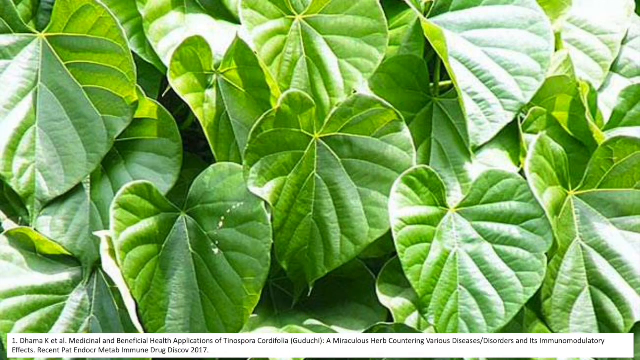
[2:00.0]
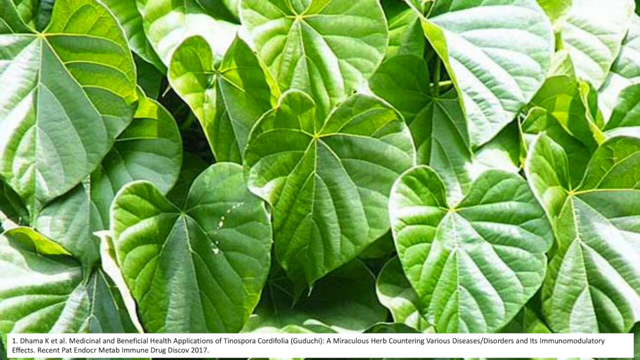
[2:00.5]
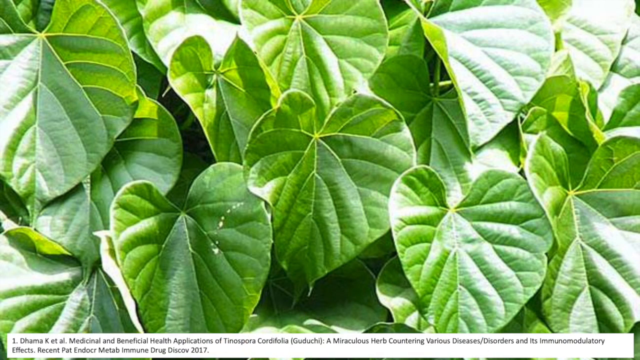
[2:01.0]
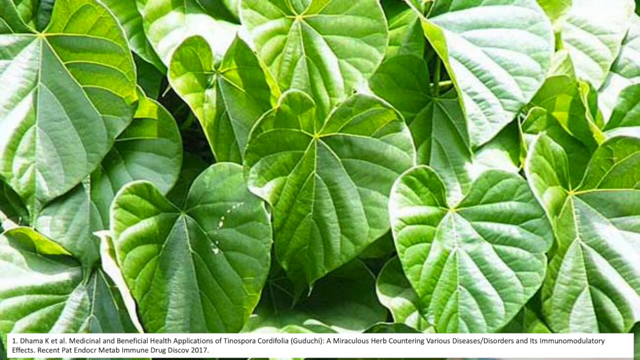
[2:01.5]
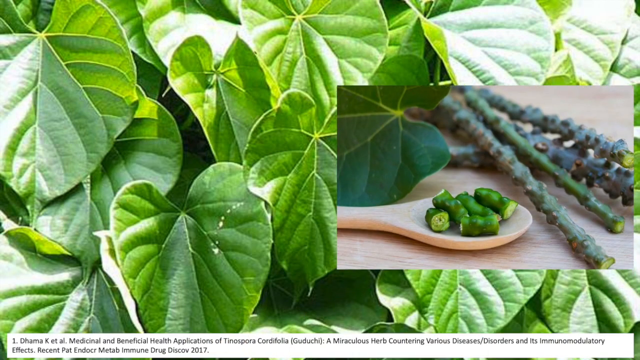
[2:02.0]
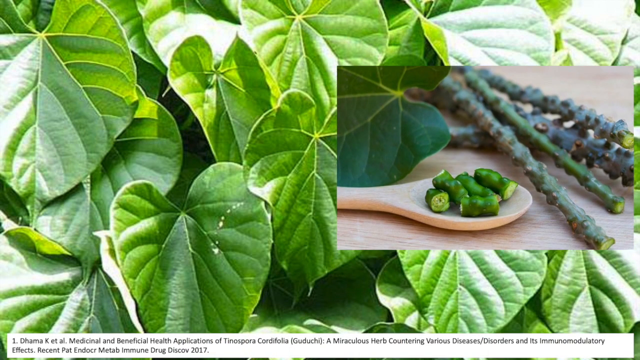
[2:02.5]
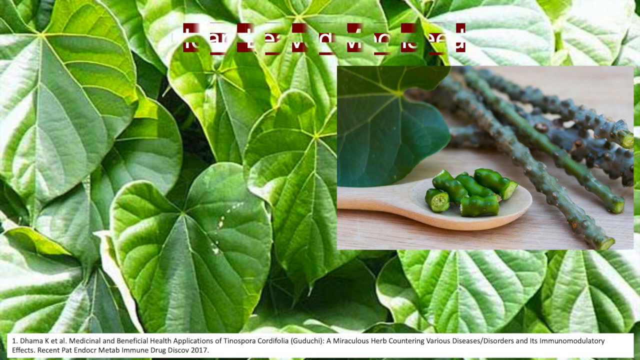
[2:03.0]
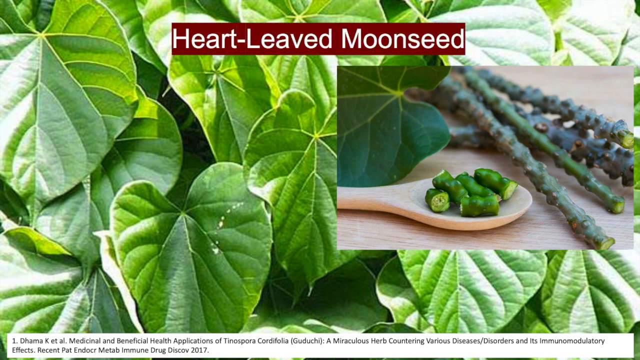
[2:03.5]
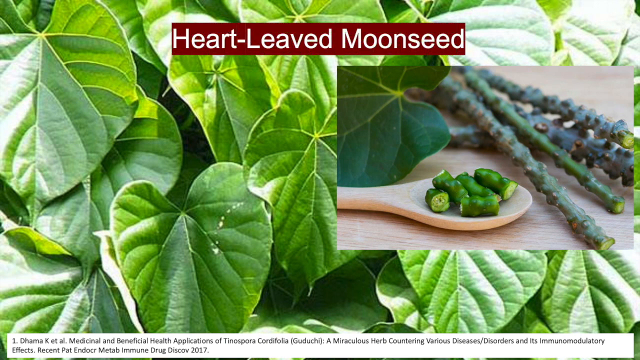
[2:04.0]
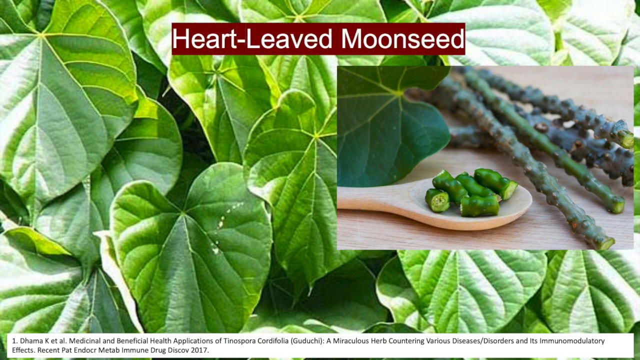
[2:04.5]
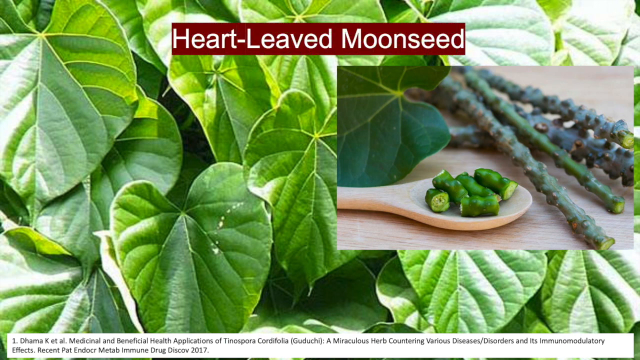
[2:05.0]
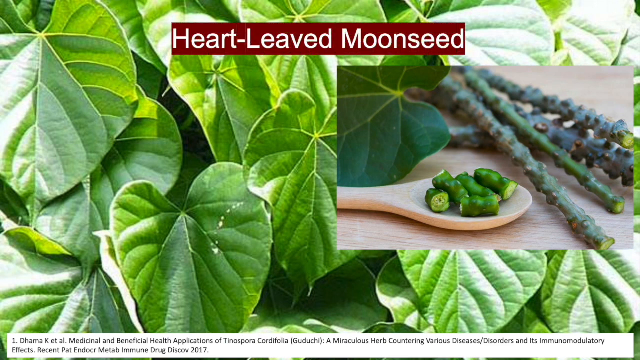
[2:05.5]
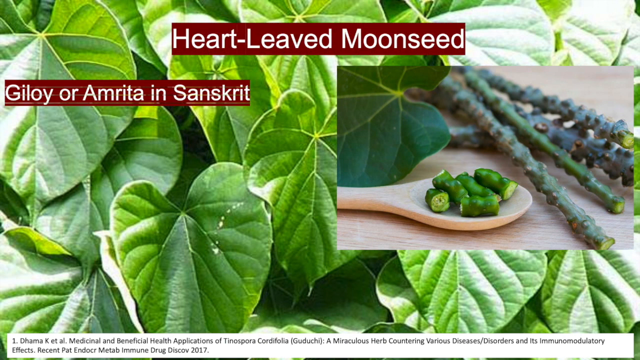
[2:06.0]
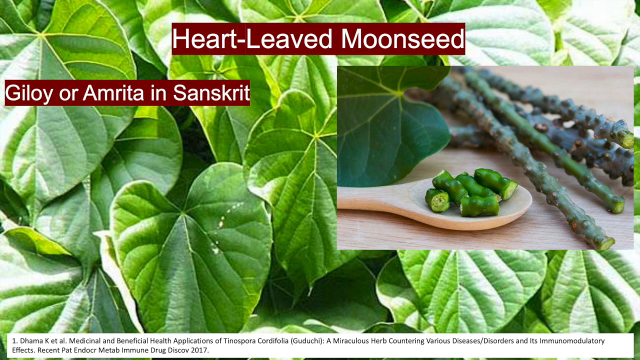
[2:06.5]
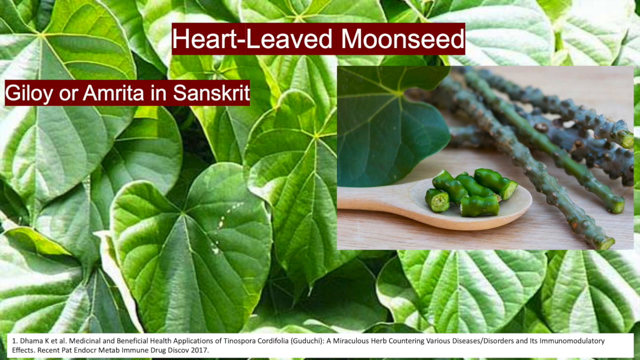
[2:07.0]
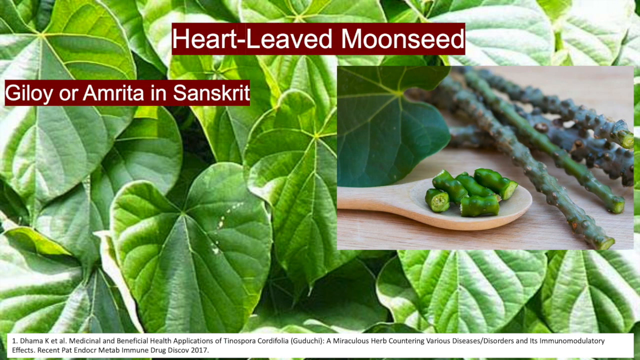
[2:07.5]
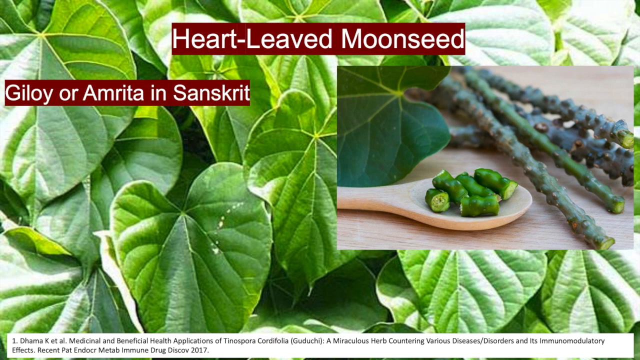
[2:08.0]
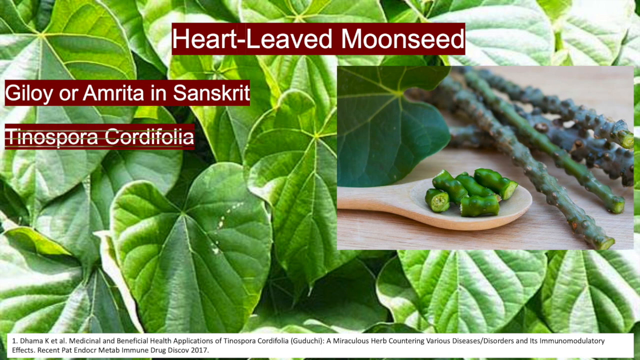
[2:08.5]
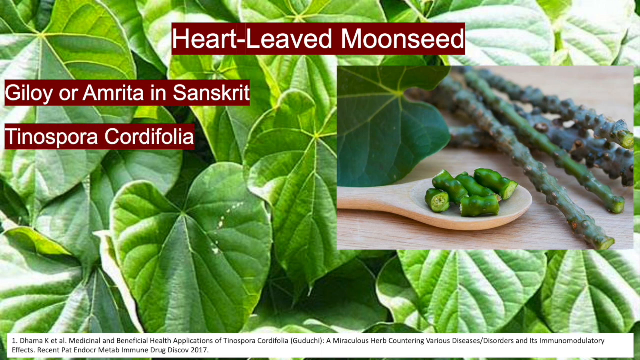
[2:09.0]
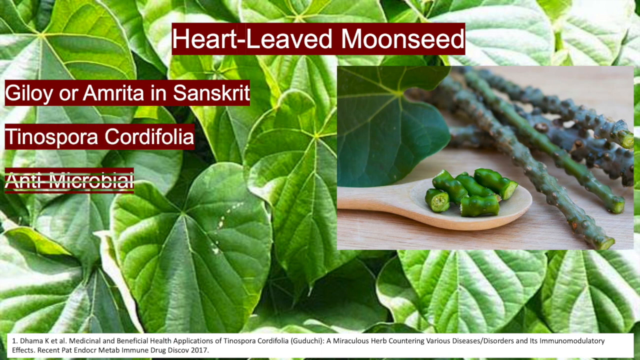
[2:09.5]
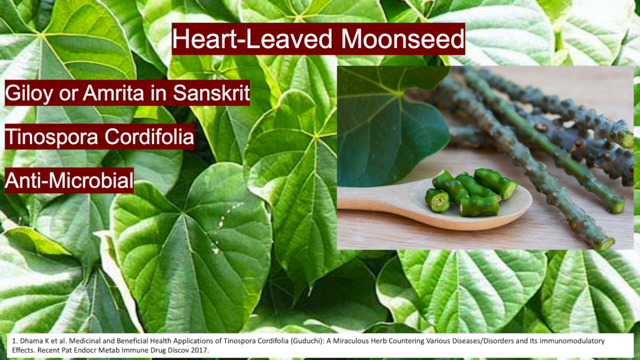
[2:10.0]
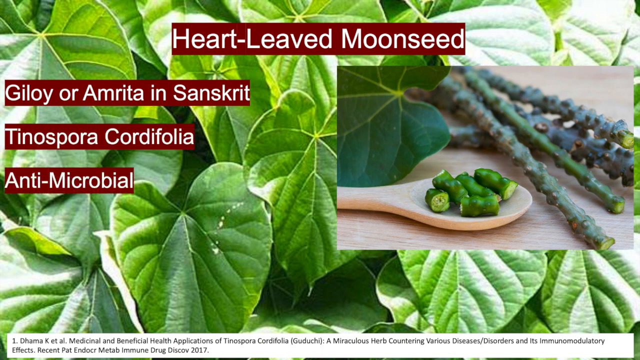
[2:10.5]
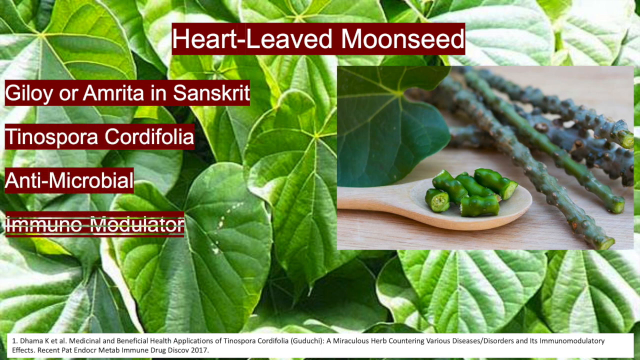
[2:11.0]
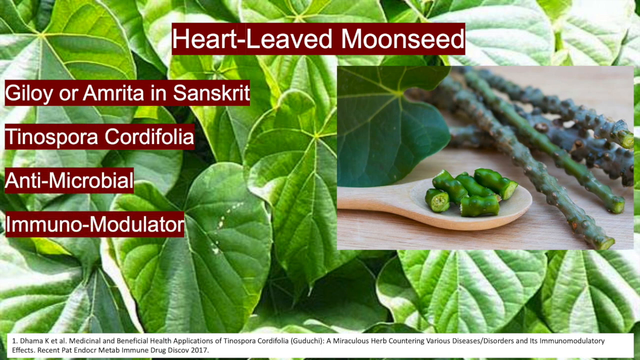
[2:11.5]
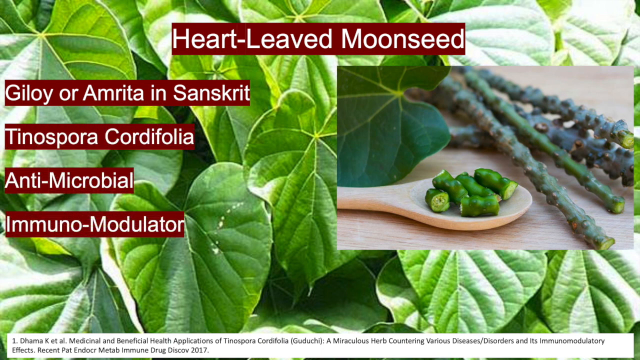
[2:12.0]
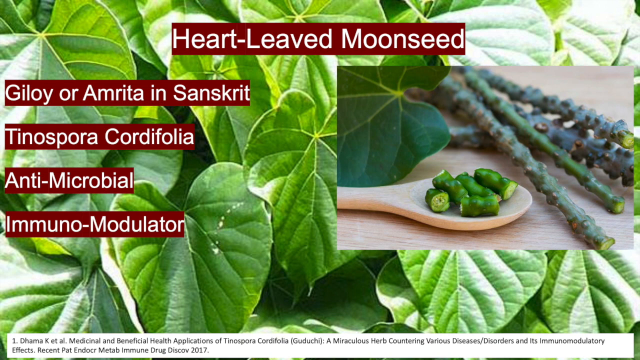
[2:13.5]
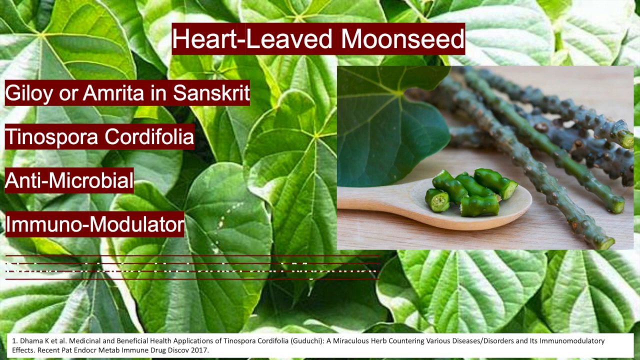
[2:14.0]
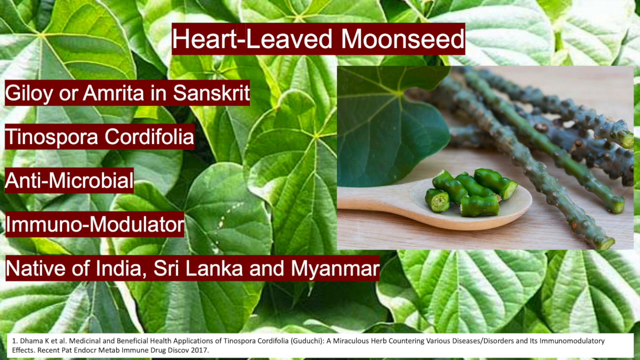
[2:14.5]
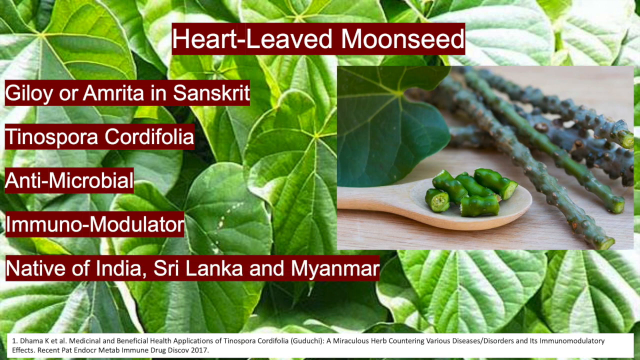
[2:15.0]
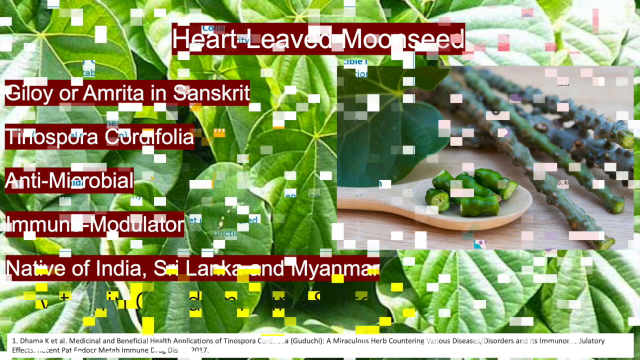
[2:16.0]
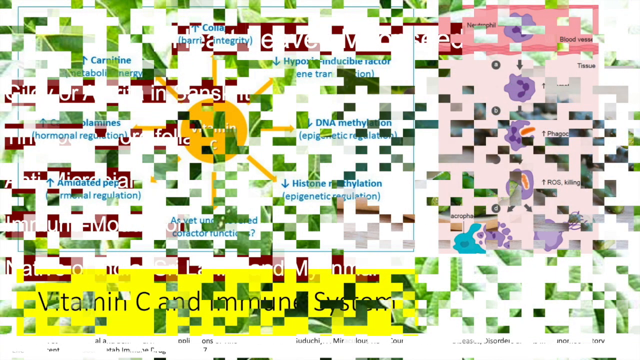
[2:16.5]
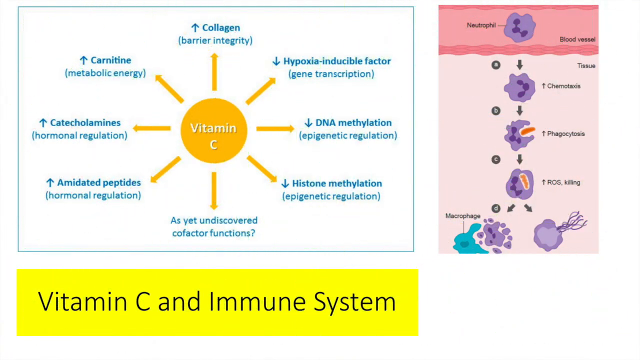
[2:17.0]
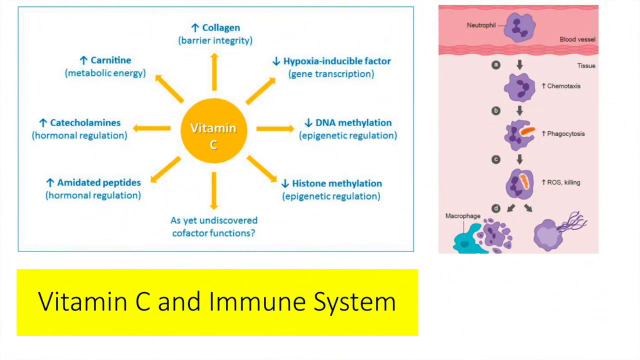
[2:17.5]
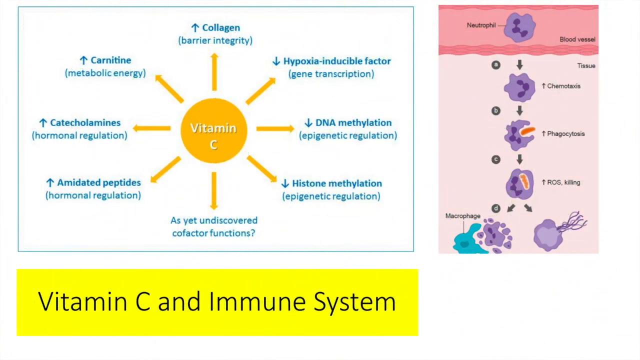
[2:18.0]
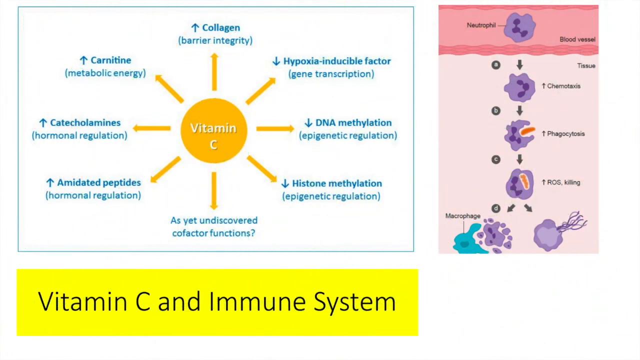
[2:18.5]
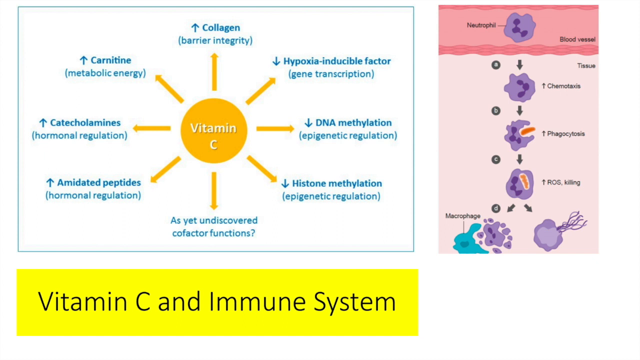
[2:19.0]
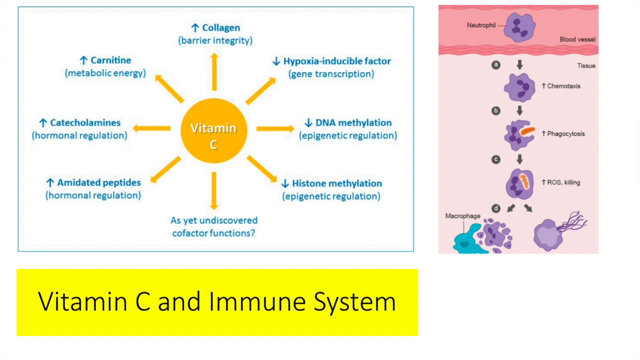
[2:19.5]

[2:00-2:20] A still shows a background of broad green leaves running top to bottom and taking up the entire frame. An inset then appears on the right-hand side of the leaves, showing a wooden spoon on a wooden tray of some kind, holding slices from a green stem, with green stems lying down to the front and left of the spoon. The words "heart-leaved moonseed" appear in white letters inside a red rectangular box, apparently describing the cuttings on the spoon. Next, to the left of the inset picture, another red box appears with white letters reading "Galoi or Amrita in Sanskrit". Two more red boxes then appear: the first, underneath the previous one, reads "Tenospora cordifolia", and the one below it reads "antimicrobial".